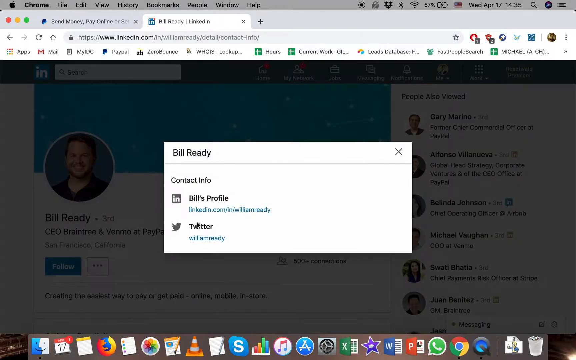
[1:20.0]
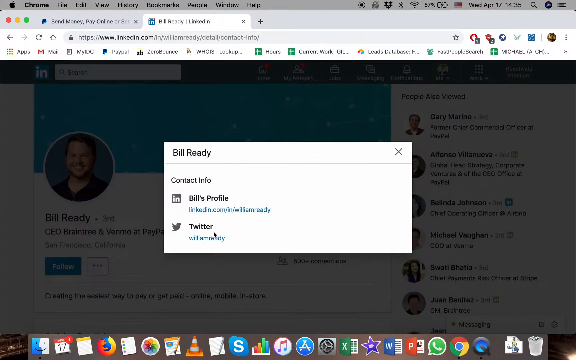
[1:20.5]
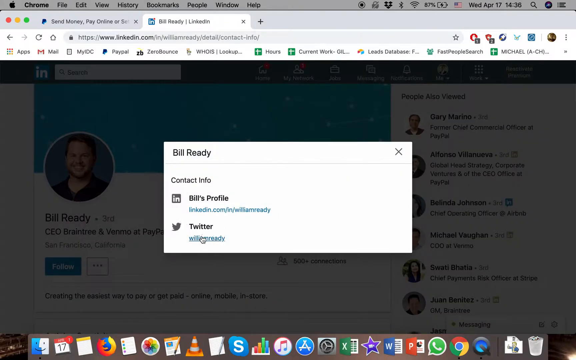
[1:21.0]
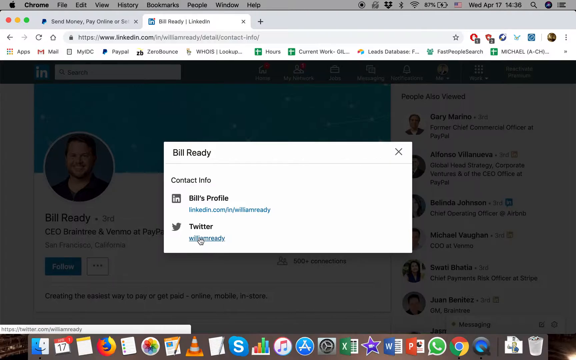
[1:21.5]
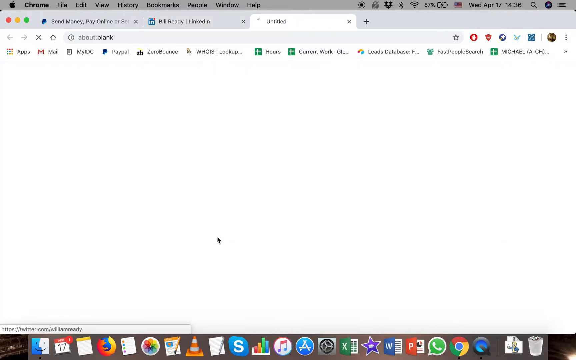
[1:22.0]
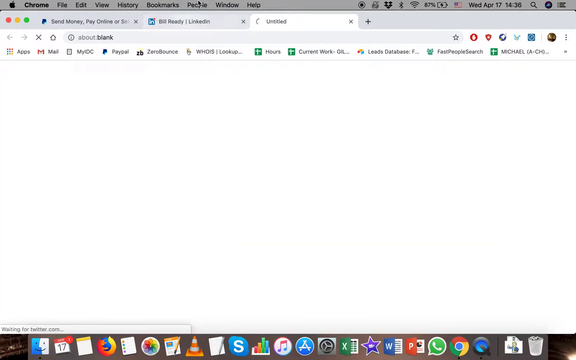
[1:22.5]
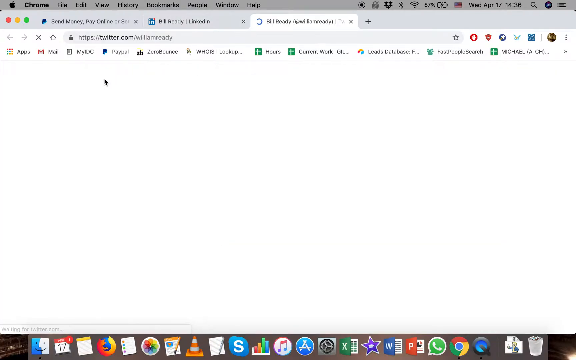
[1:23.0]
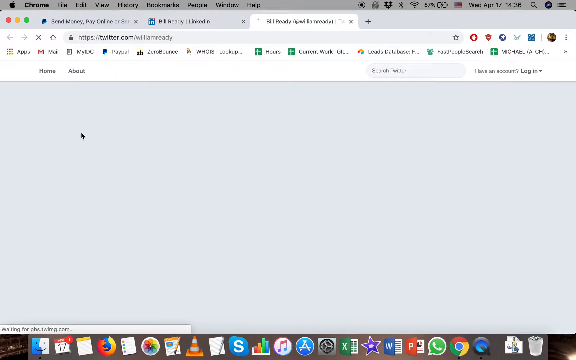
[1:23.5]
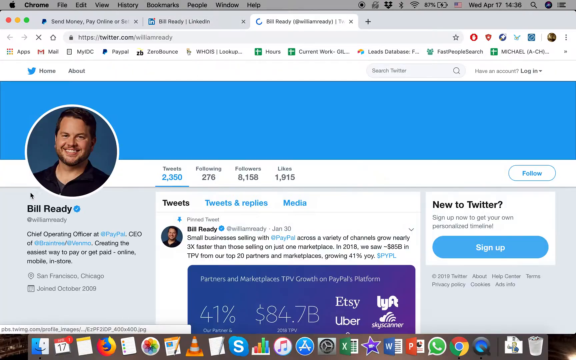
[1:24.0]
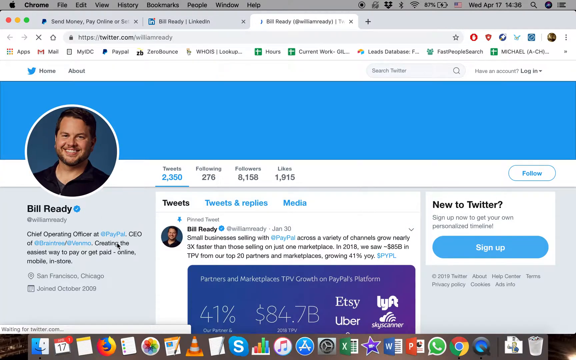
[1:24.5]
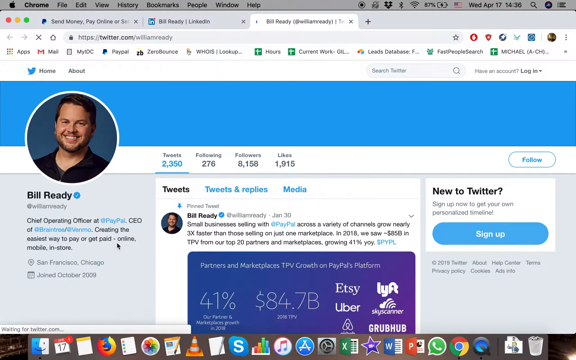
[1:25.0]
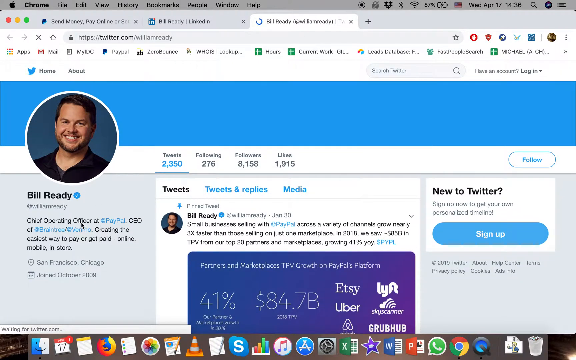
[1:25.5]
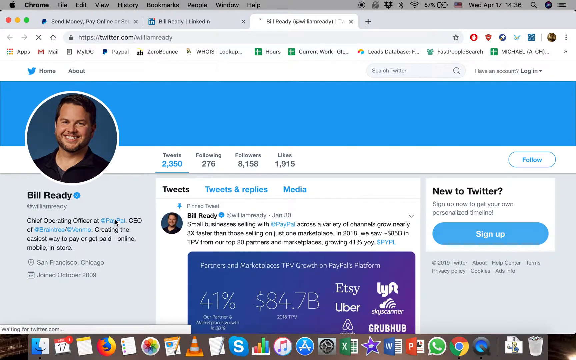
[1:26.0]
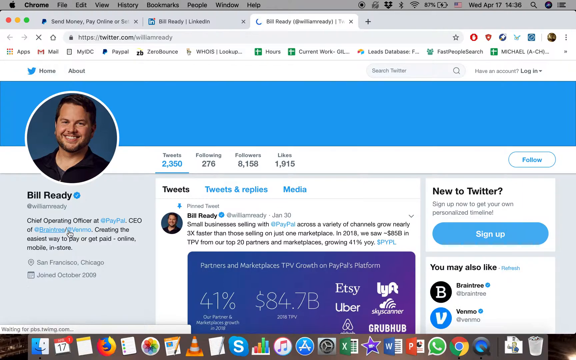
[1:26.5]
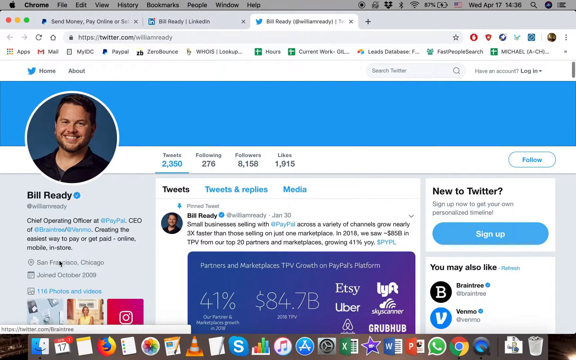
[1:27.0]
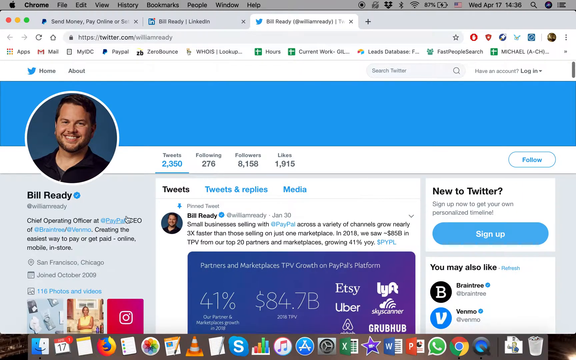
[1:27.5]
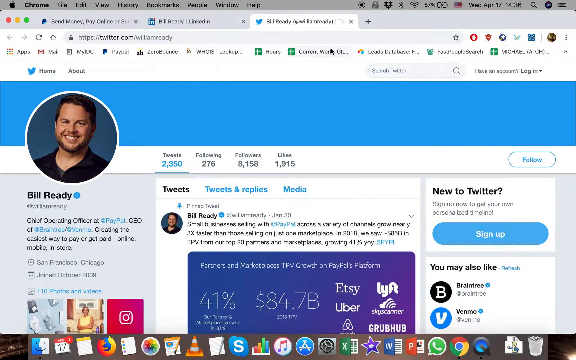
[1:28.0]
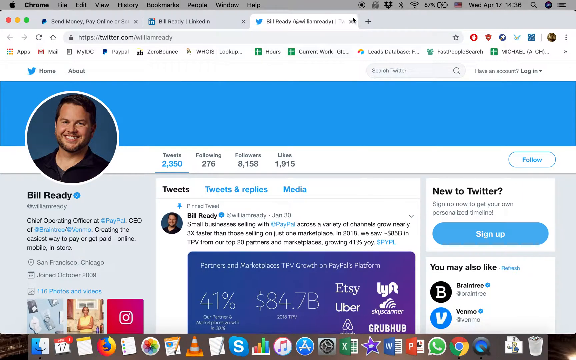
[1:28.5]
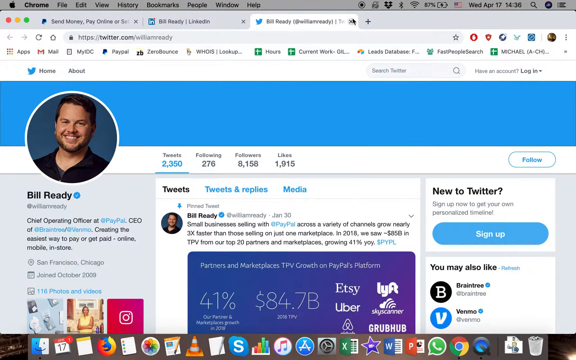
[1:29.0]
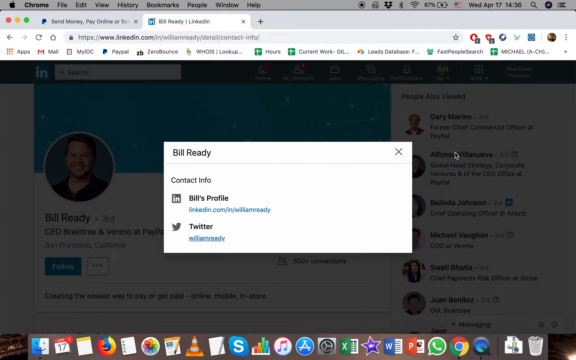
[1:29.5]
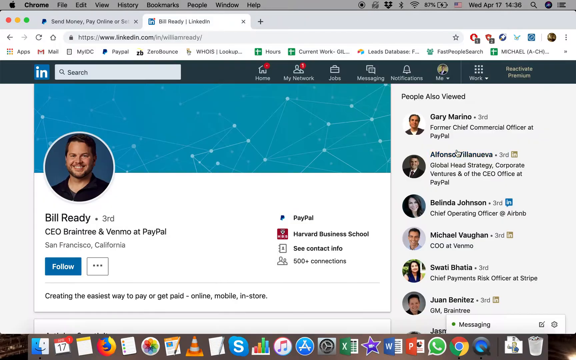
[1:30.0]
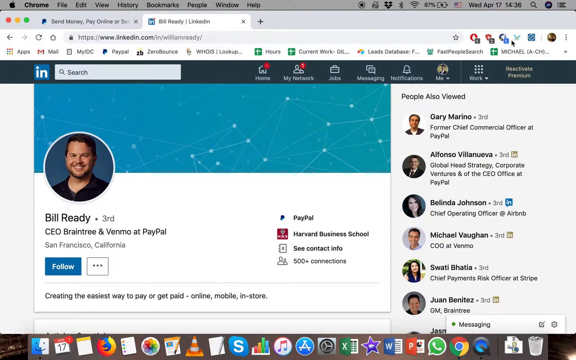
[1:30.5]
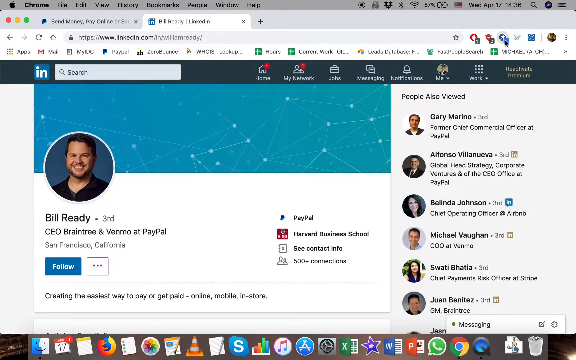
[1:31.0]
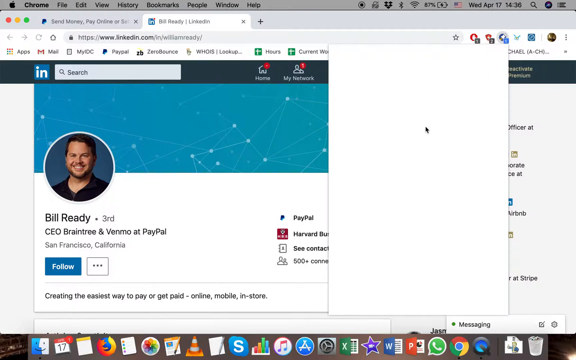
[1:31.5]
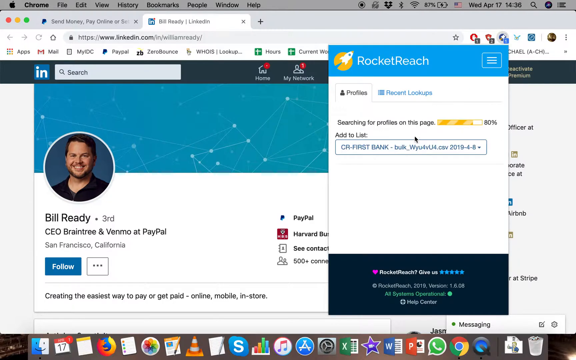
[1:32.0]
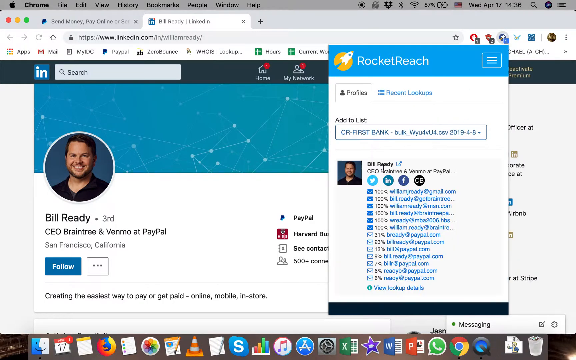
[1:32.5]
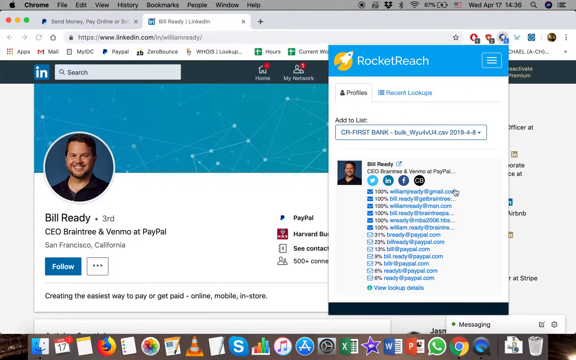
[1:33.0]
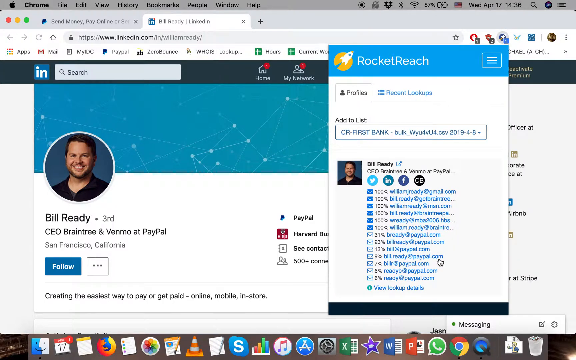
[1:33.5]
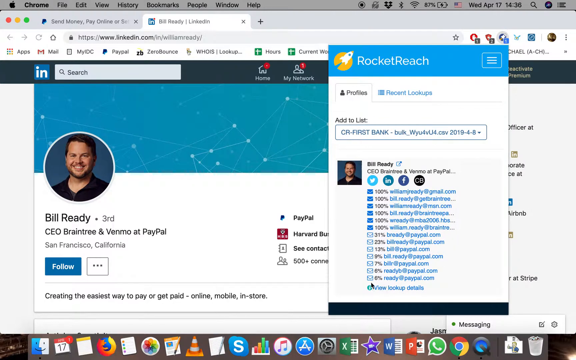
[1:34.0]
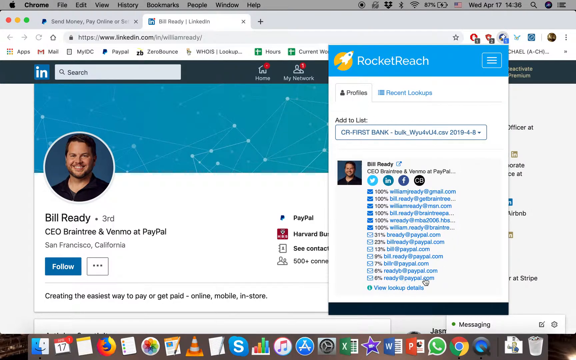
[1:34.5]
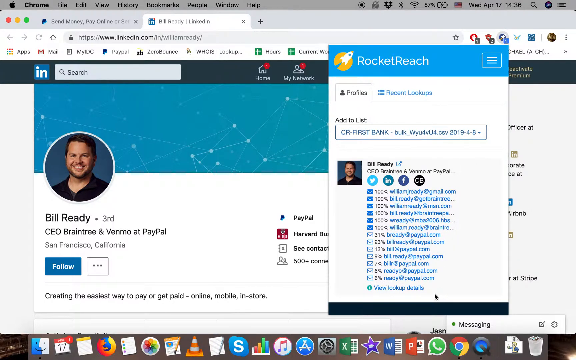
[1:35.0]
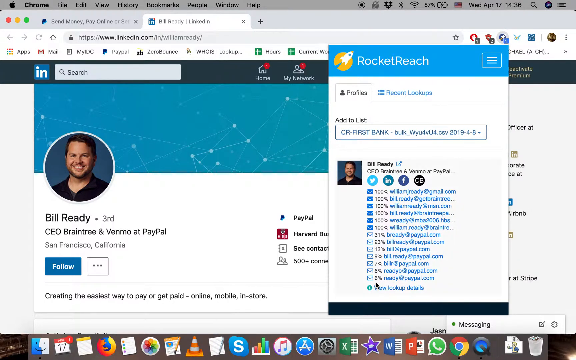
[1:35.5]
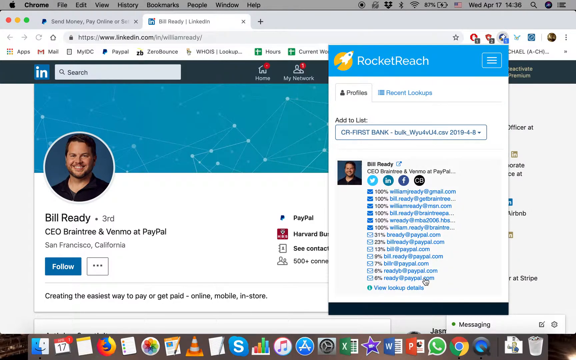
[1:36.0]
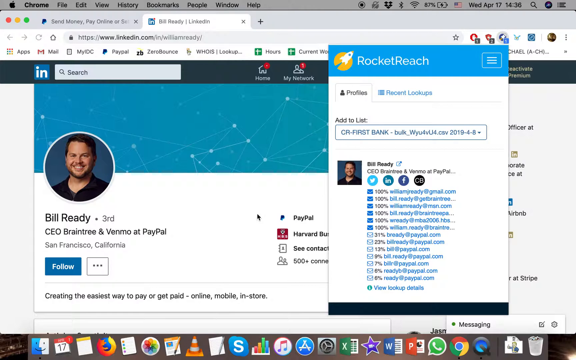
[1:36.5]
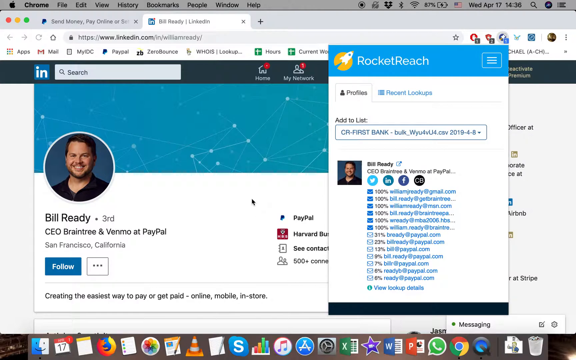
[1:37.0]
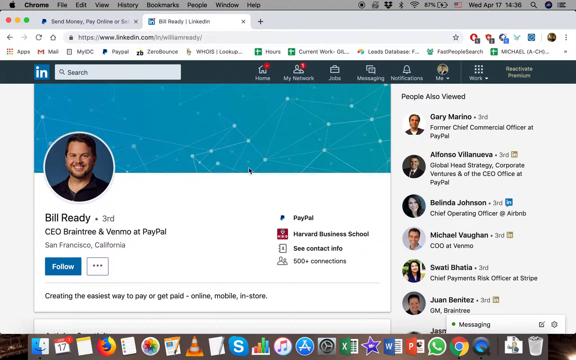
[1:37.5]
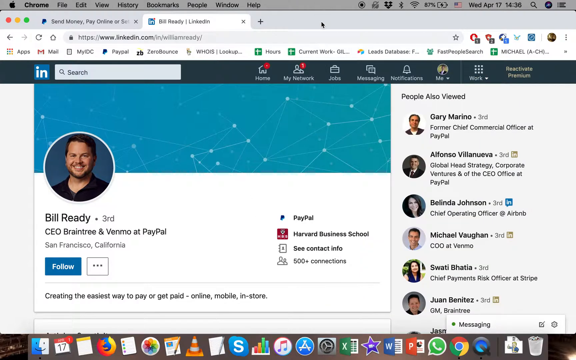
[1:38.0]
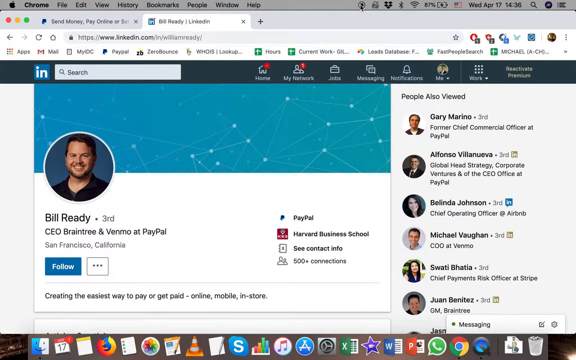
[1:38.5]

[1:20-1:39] The browser has two tabs open: PayPal and a LinkedIn profile for Bill Reddy, CEO of Braintree and Venmo at PayPal. A contact info pop-up for Bill Reddy shows his LinkedIn profile link and Twitter handle. The user clicks the Twitter handle, which opens a third tab with Bill Reddy's official Twitter homepage showing various information. The user mouses over the profile description, which reads "Chief Operating Officer at PayPal, CEO of at Braintree / at Venmo, creating the easiest way to pay or get paid, online, mobile, and store." They close the Twitter tab, returning to the LinkedIn tab, and open the Rocket Reach extension, which shows a profile for Bill Reddy along with email addresses potentially associated with him, each with the percentage chance of association to its left.